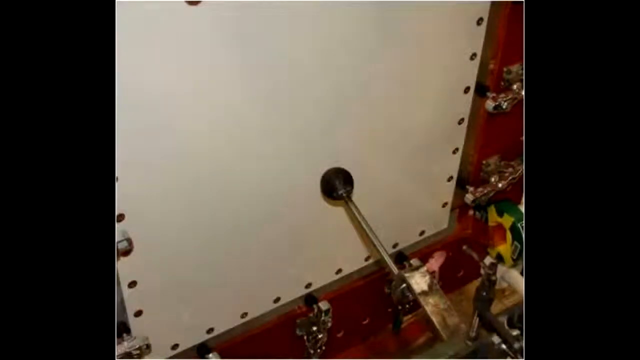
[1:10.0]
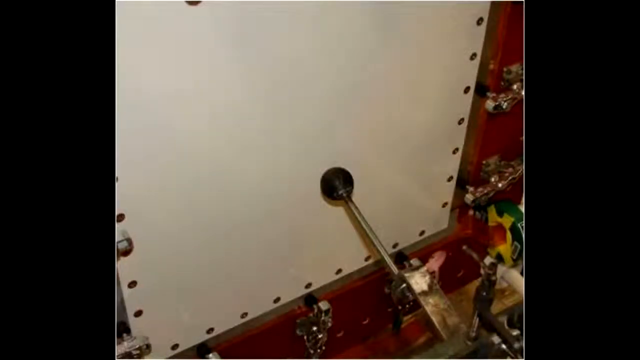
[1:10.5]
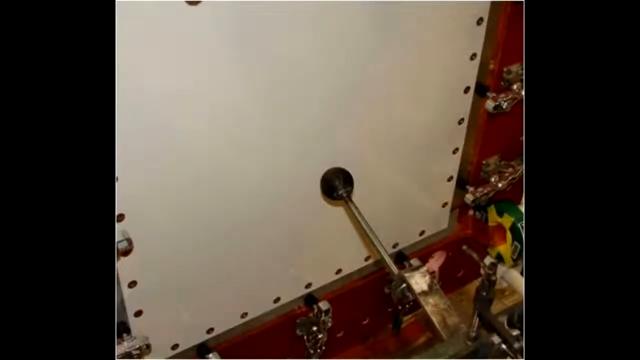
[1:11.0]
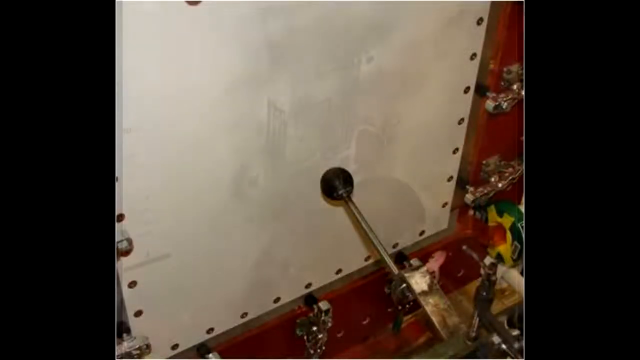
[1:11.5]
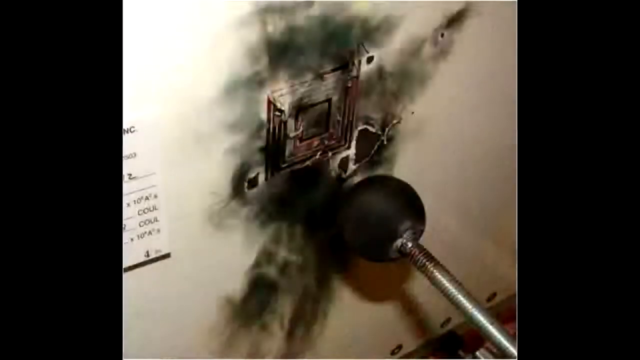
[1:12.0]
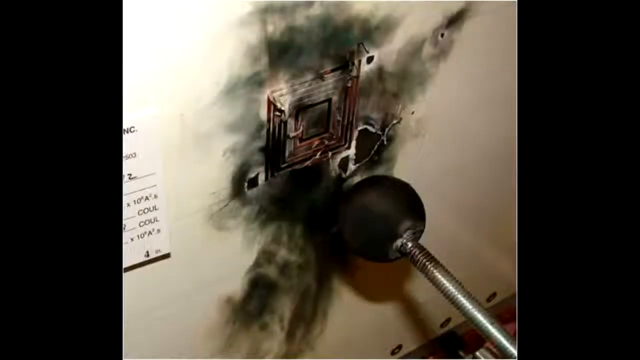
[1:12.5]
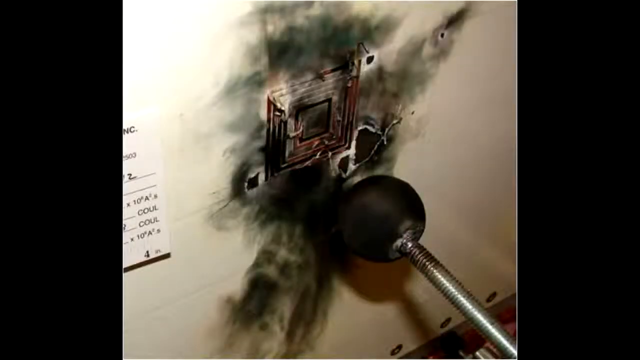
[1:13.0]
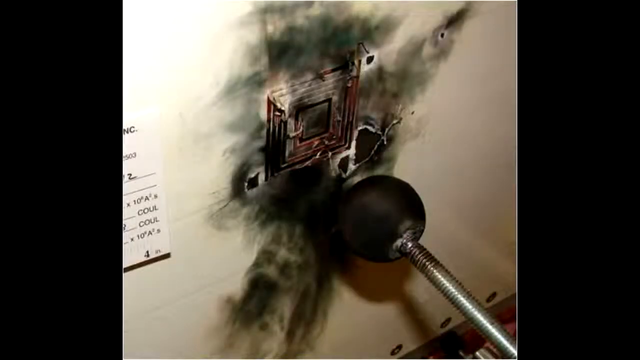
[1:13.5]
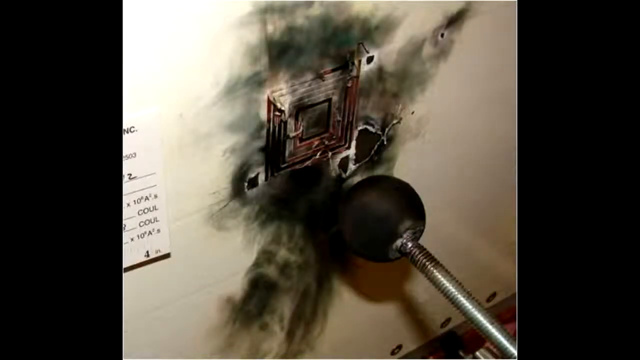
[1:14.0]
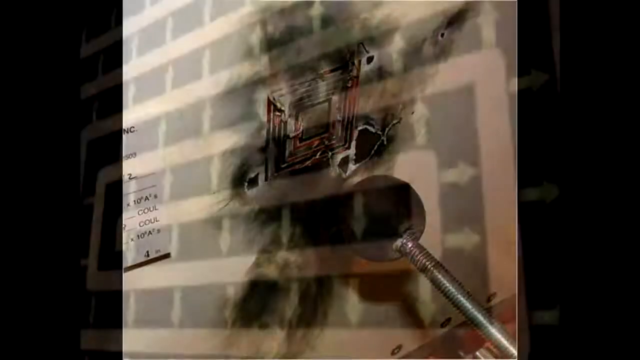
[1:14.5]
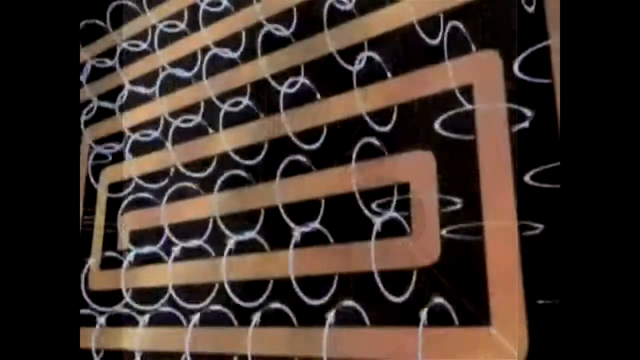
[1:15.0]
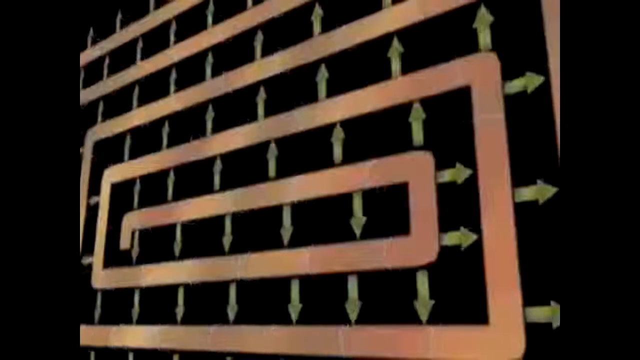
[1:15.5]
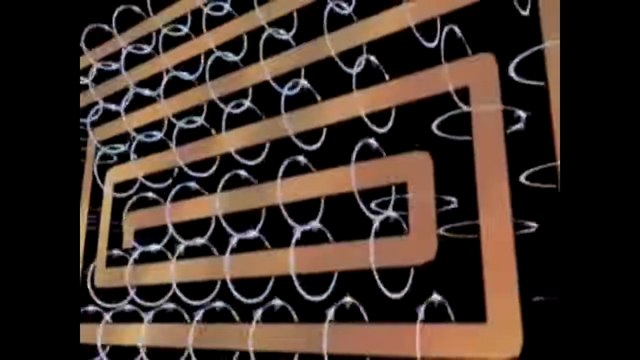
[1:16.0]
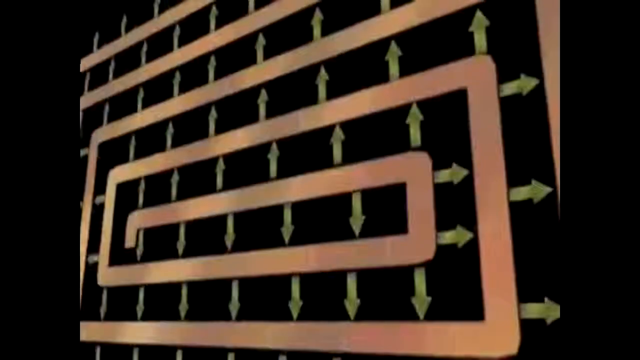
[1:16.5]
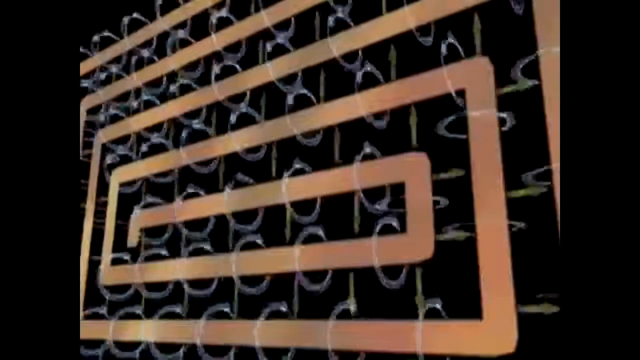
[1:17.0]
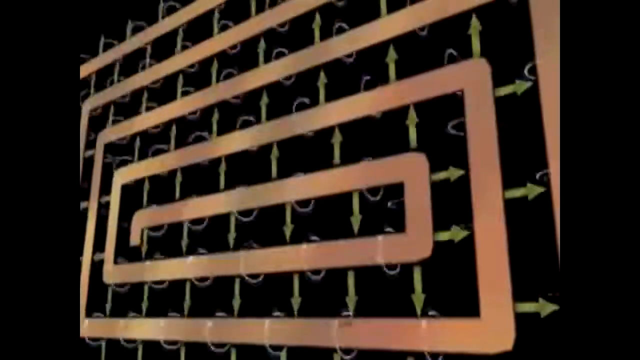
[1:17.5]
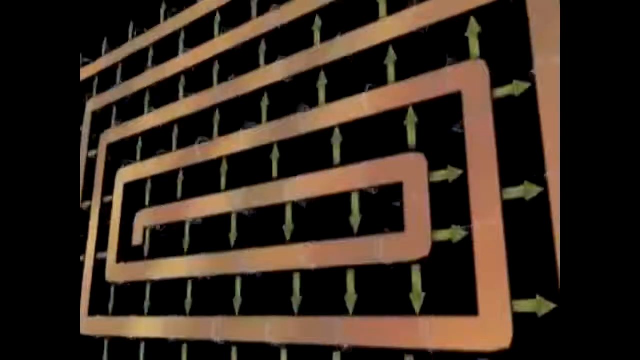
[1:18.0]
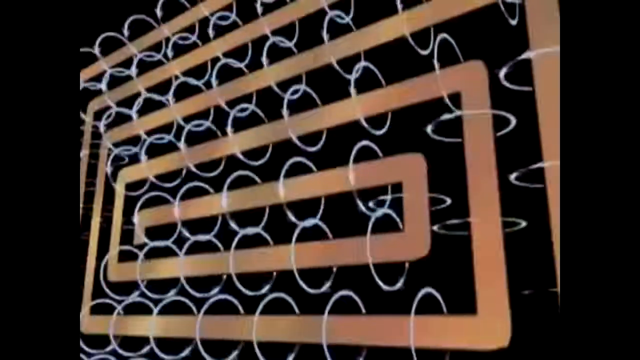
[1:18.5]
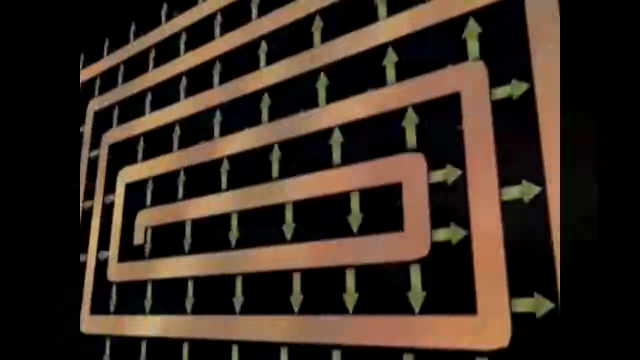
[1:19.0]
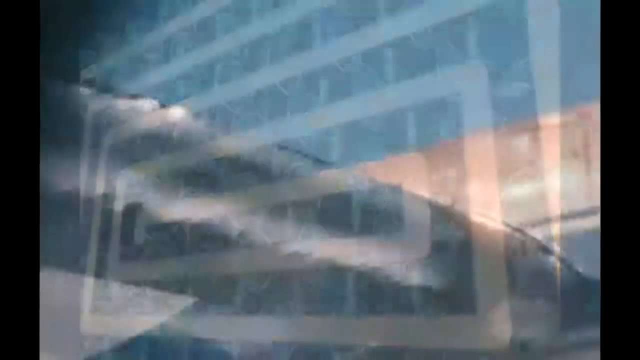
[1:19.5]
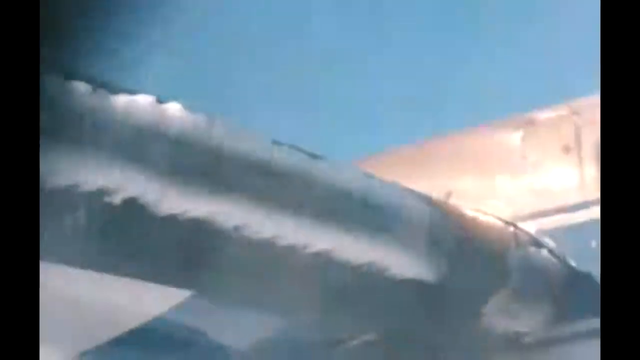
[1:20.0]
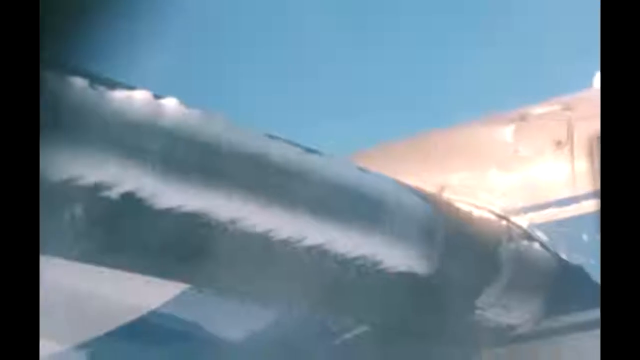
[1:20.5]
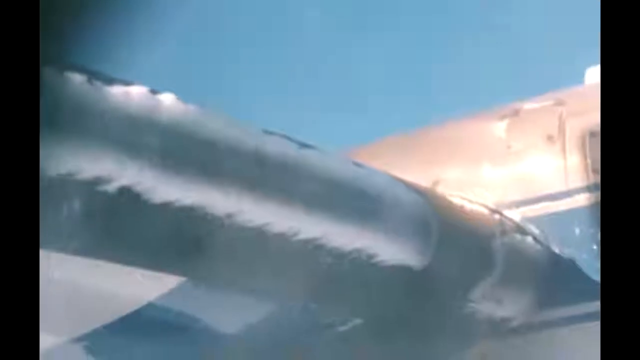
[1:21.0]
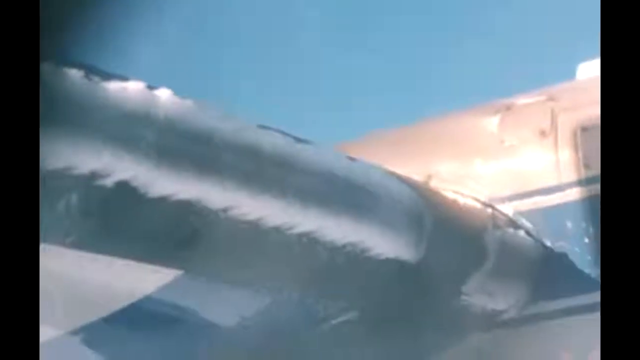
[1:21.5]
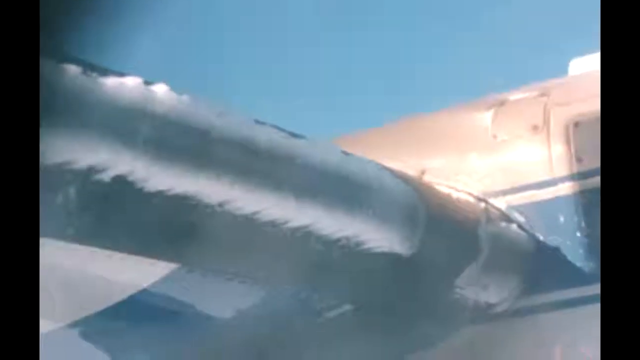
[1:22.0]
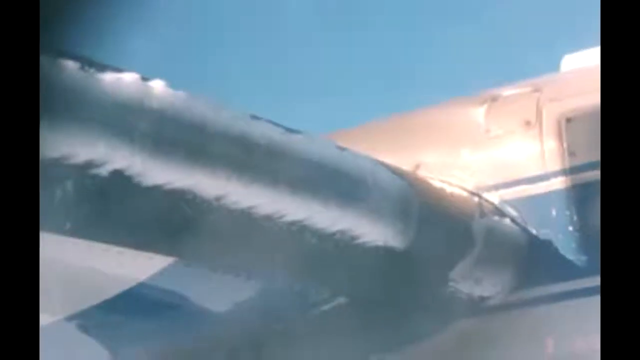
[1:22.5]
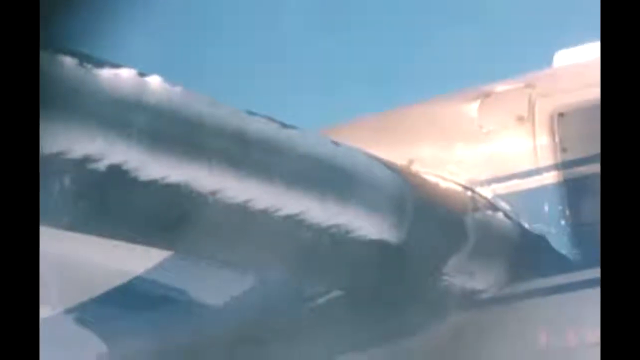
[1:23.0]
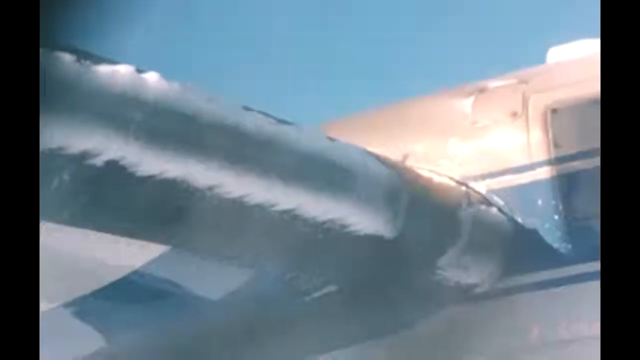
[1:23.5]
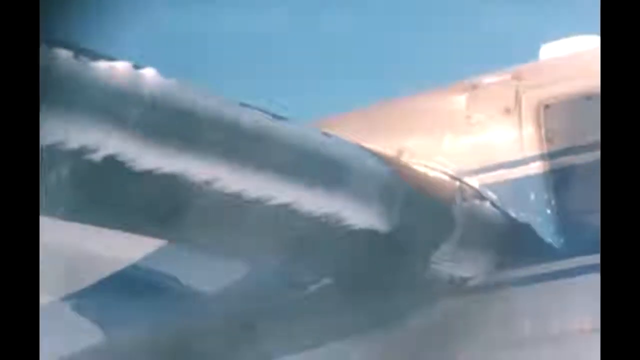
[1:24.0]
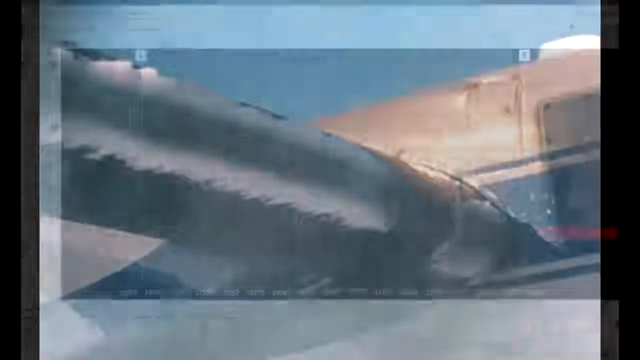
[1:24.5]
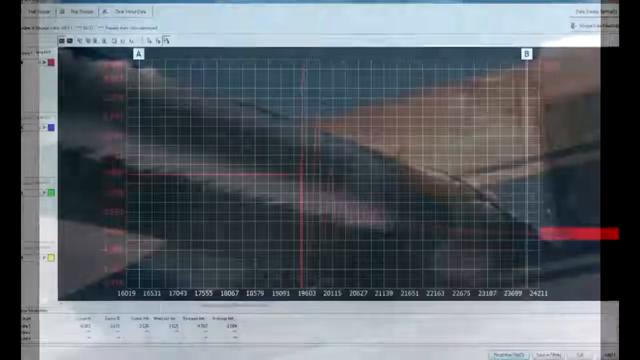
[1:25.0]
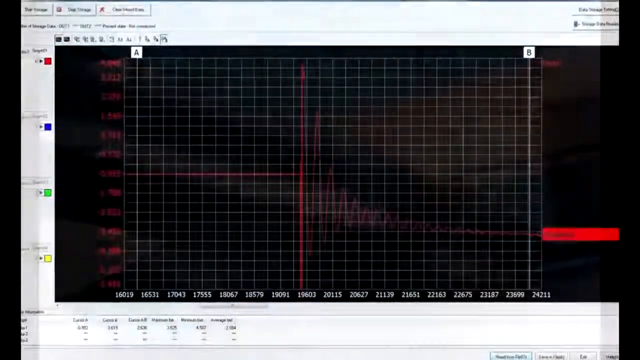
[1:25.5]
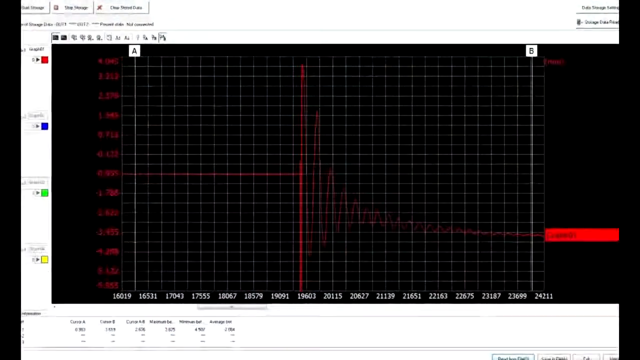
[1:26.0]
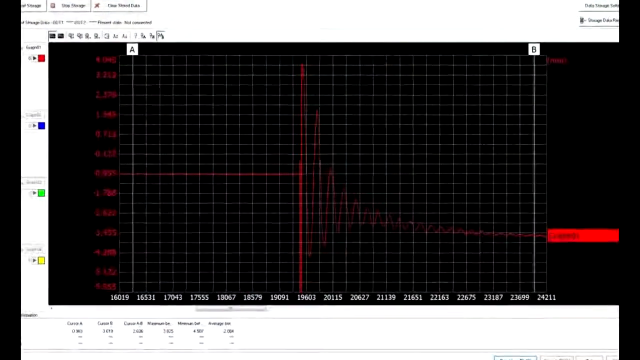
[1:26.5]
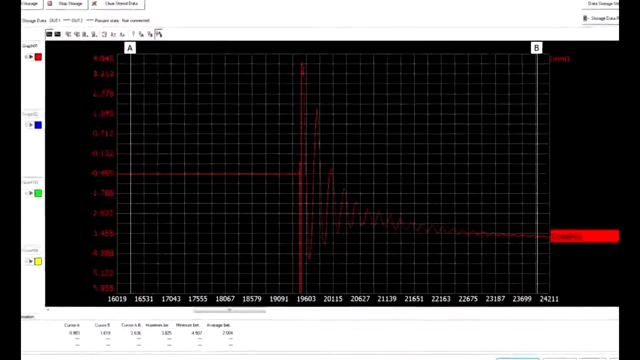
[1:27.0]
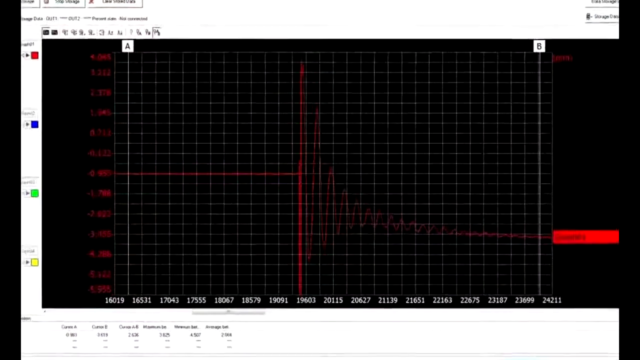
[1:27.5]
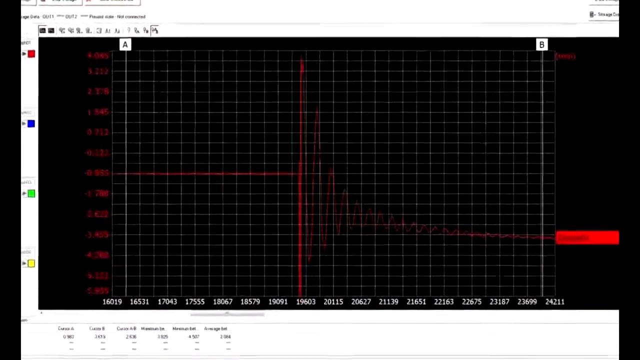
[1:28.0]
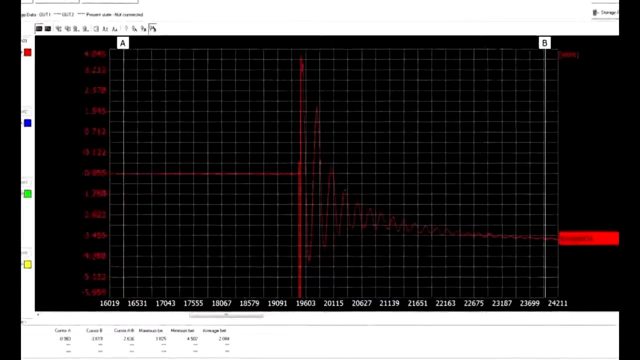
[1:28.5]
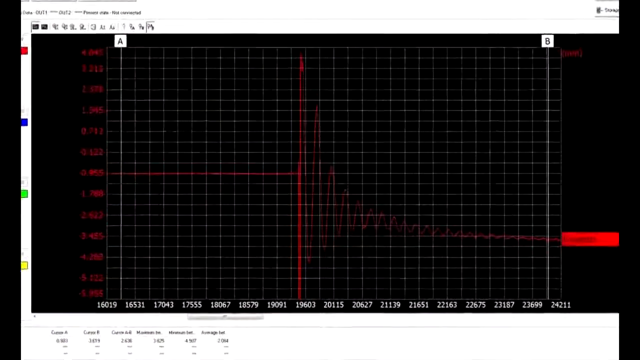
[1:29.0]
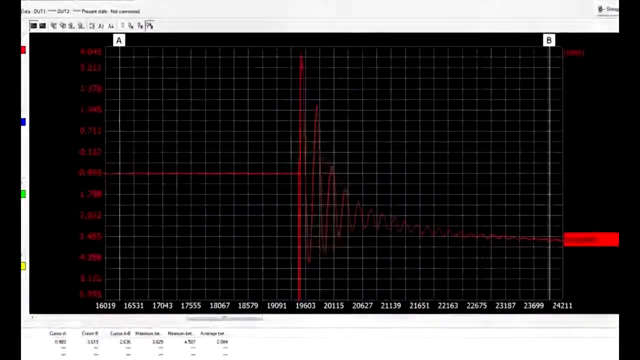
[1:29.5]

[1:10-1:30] The video returns to the same coils and the copper-brass material.